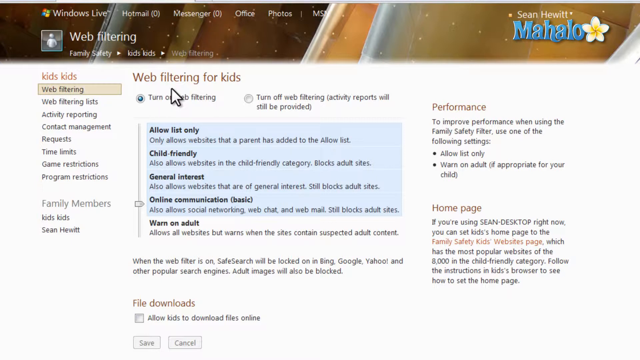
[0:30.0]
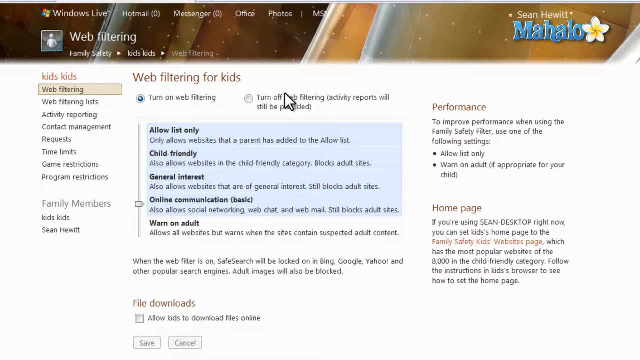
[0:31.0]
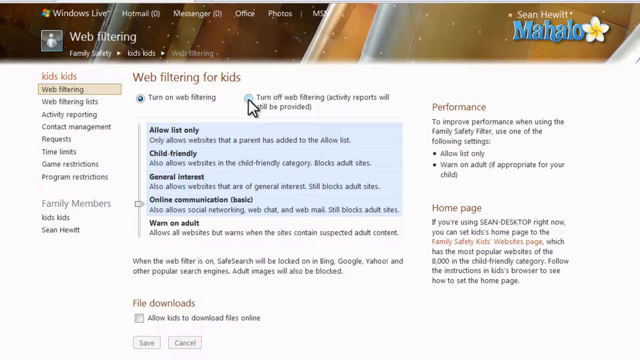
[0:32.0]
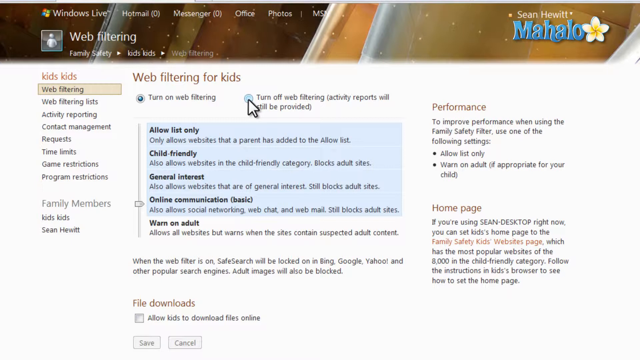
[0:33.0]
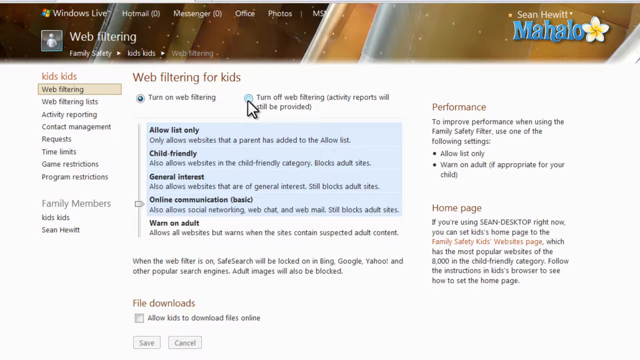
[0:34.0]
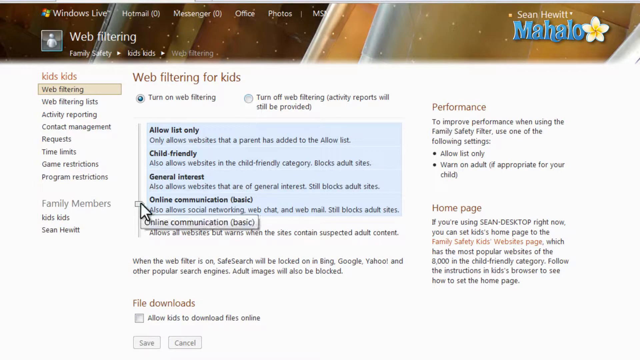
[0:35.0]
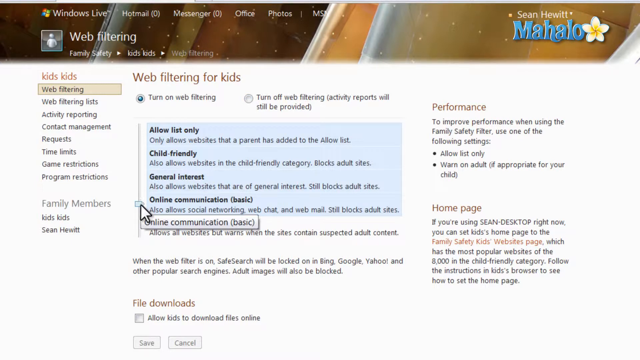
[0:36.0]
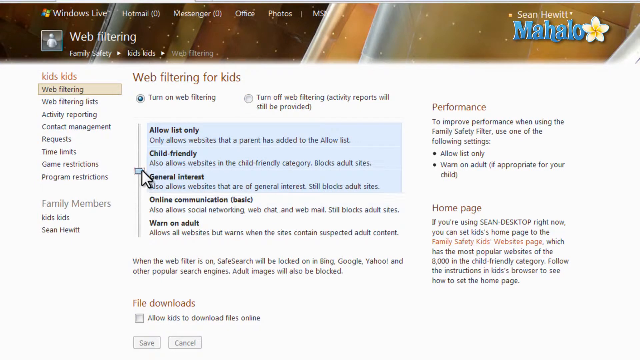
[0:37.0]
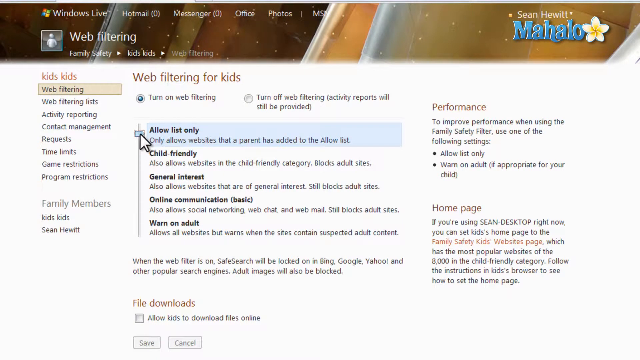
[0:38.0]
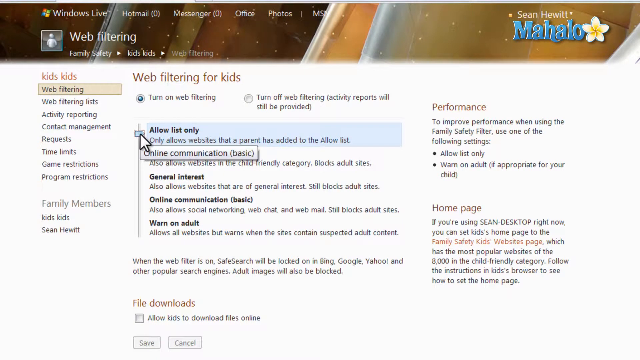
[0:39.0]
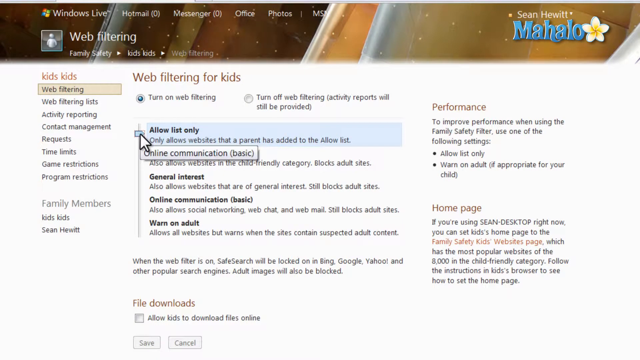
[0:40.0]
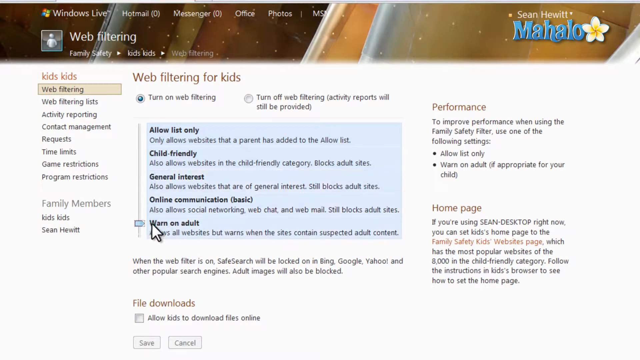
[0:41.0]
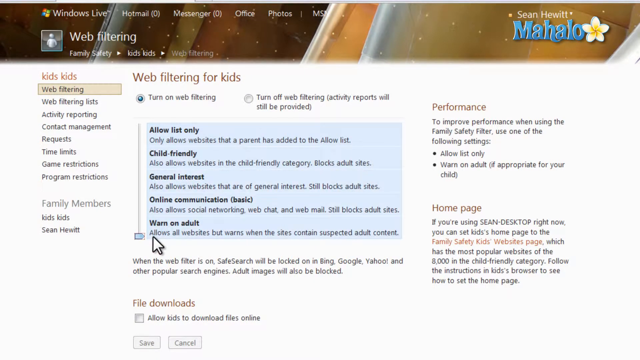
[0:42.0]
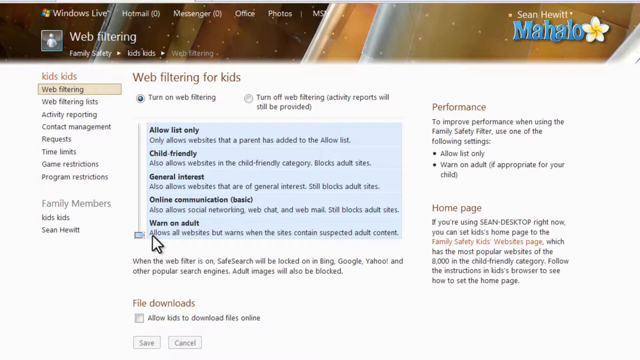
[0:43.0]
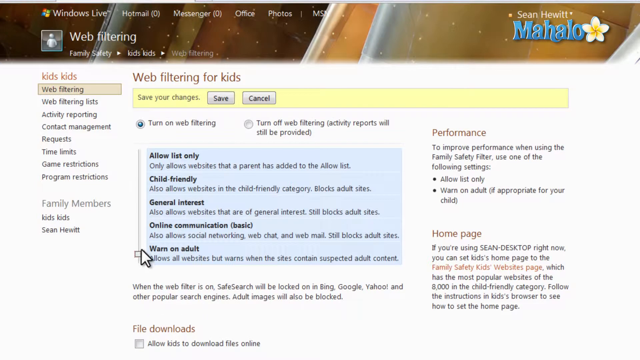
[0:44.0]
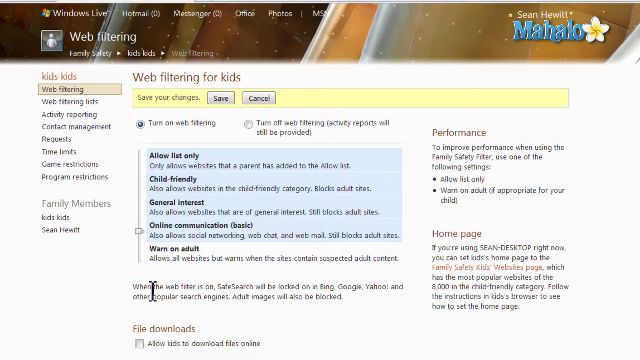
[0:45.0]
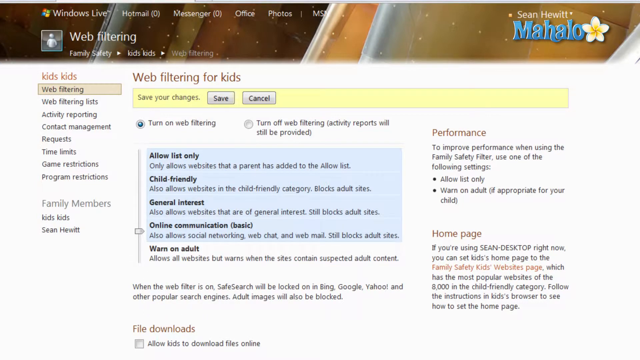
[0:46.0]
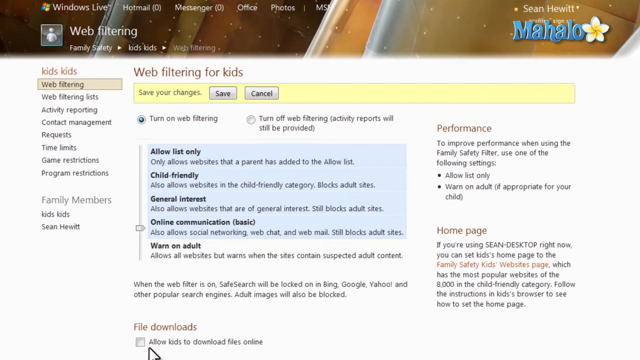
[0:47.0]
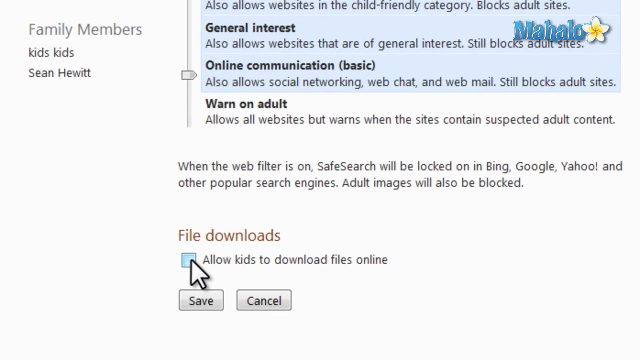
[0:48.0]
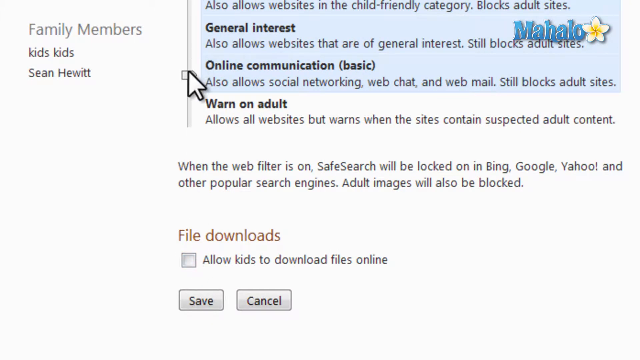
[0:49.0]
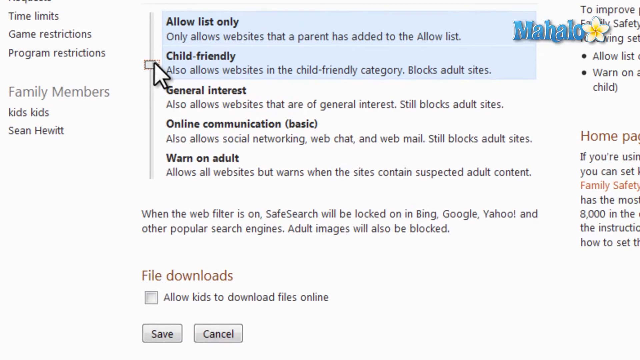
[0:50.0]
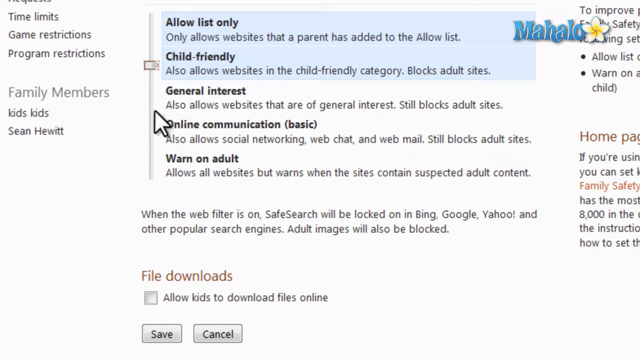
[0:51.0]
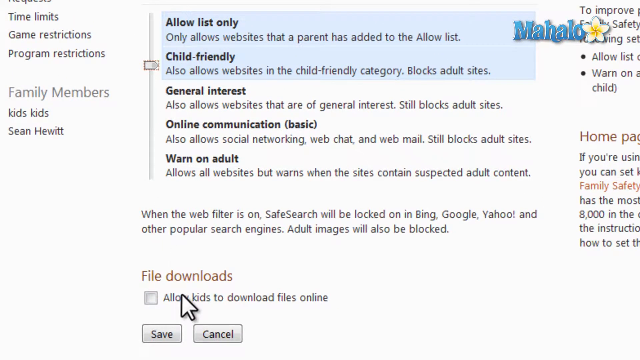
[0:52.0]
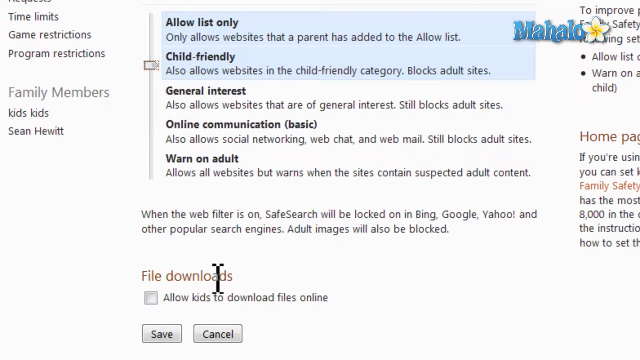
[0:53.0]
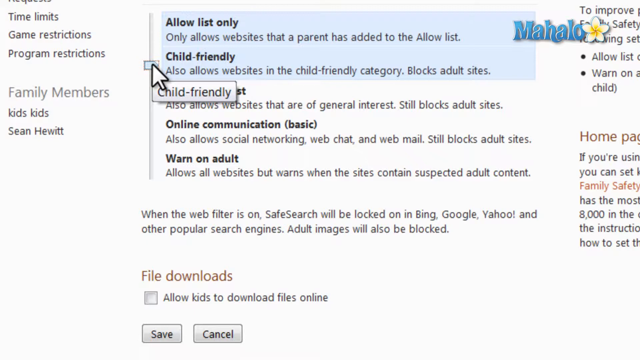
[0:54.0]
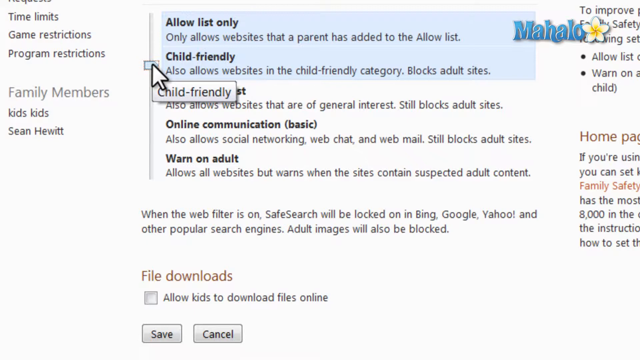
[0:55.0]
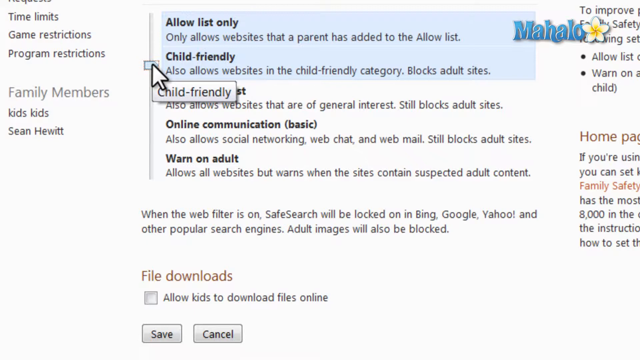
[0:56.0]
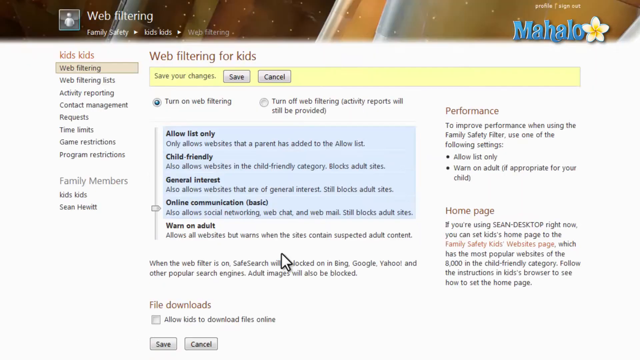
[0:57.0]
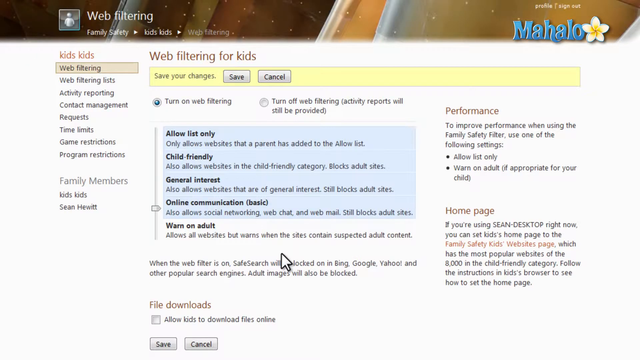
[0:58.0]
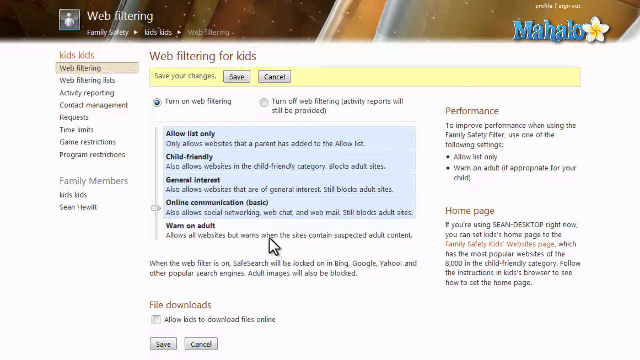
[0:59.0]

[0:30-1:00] The cursor hovers for a moment over the selected blue "turn on web filtering" option, then moves around the other option without selecting it; when it does, that option shows a light blue circle rather than solid blue. The cursor then moves down to a vertical slider with the levels "allow list only", "child-friendly", "general interest" and "online communication basic", currently set on online communication. As he raises it, the slider moves from online communication to general interest above it, highlighting the block it is on; the very top level is "allow list only". While he holds it down, a small caption-like box pops up underneath mentioning "communication basic". He then moves it all the way down, highlighting all of the levels in blue, and when he clicks off, it returns to the second from the bottom. The view zooms in on file downloads, where an unchecked checkbox shows that kids are currently not allowed to download files. He goes back to the slider and slides it to "child-friendly", seemingly changing his mind, then the view zooms out to "save your filter options" in a yellow box.